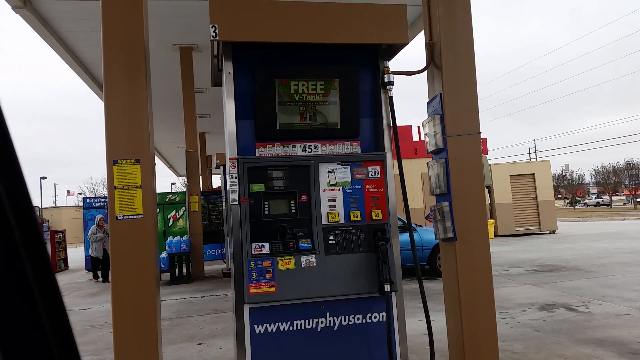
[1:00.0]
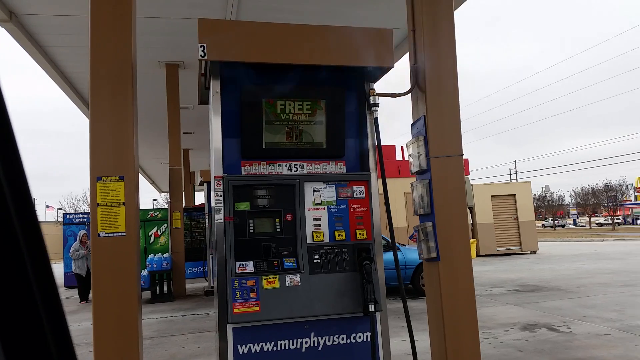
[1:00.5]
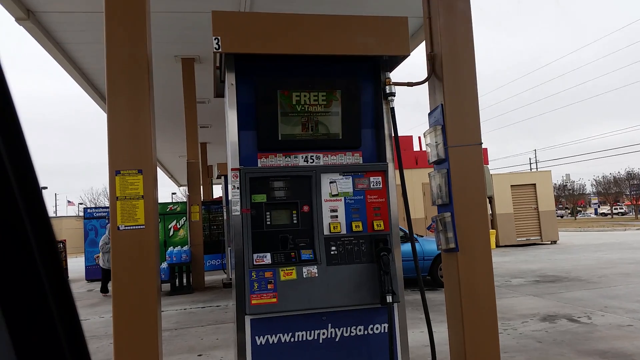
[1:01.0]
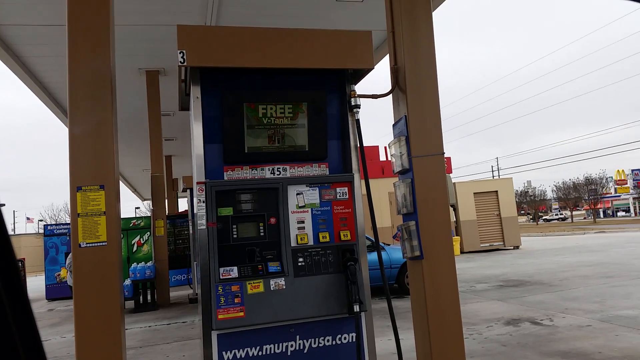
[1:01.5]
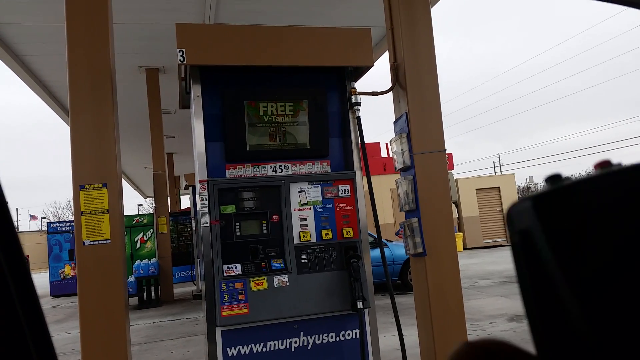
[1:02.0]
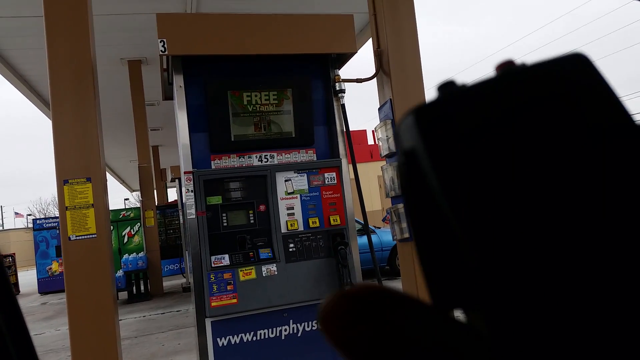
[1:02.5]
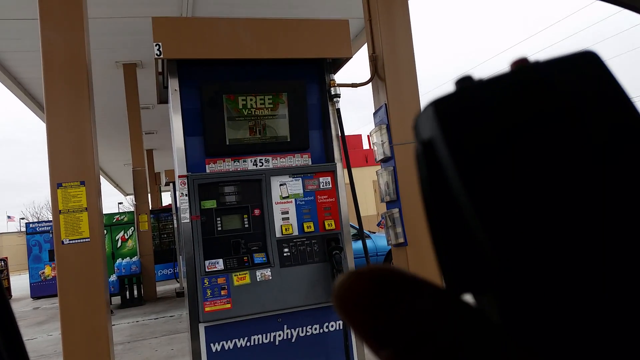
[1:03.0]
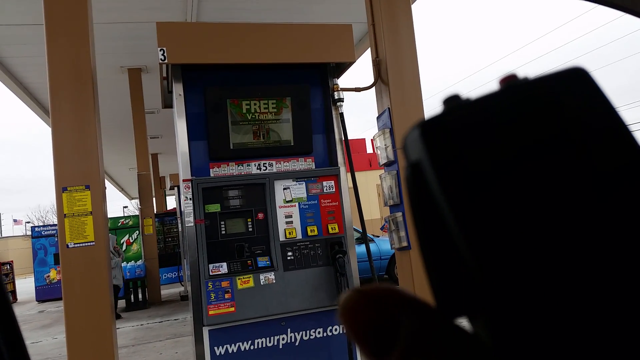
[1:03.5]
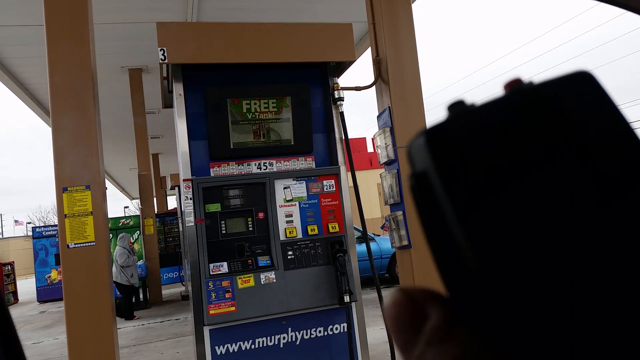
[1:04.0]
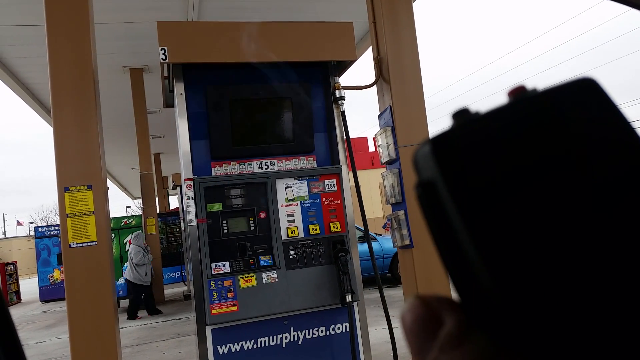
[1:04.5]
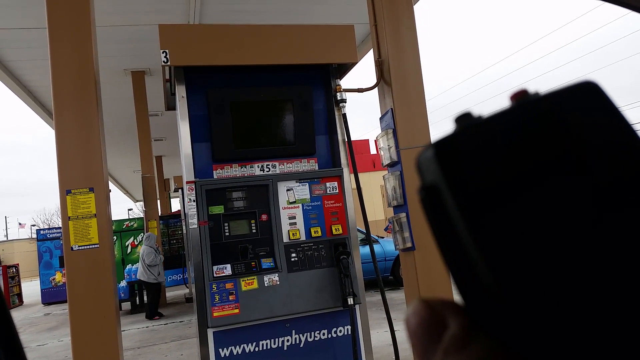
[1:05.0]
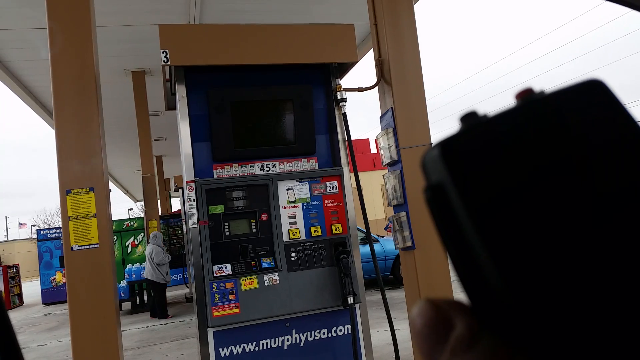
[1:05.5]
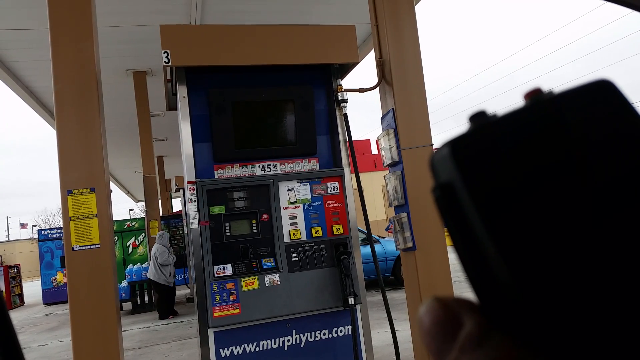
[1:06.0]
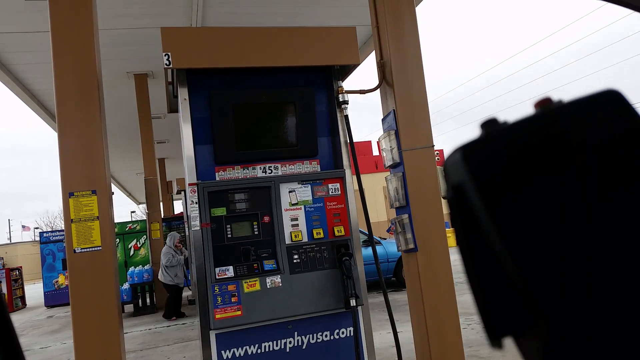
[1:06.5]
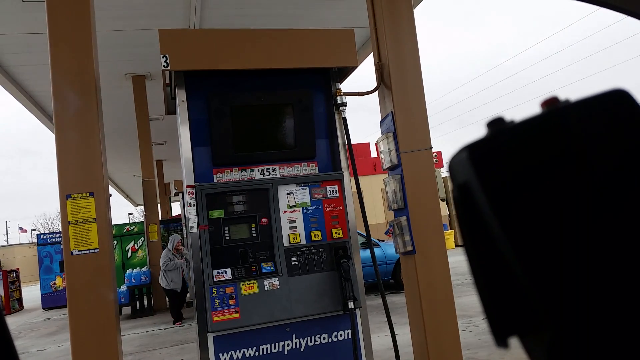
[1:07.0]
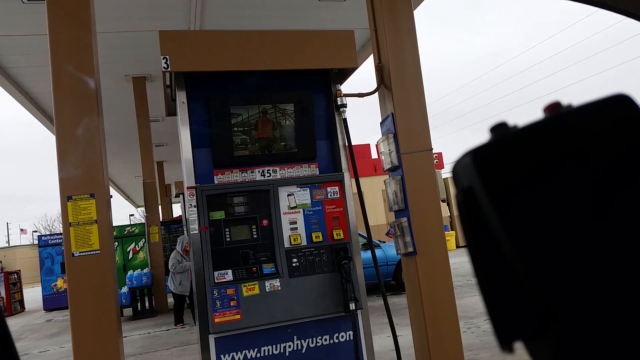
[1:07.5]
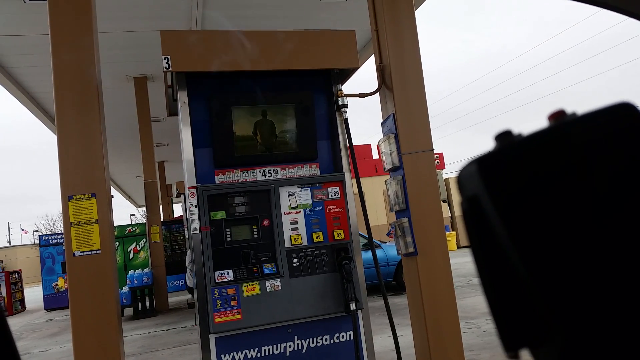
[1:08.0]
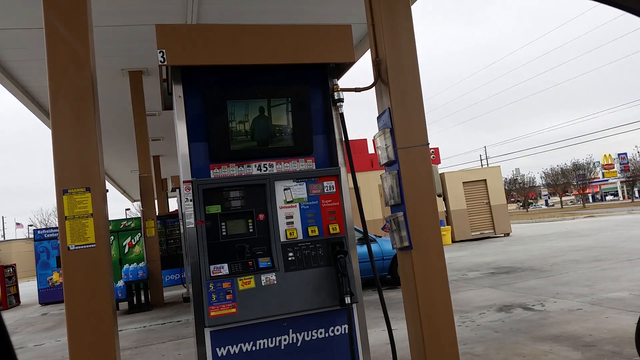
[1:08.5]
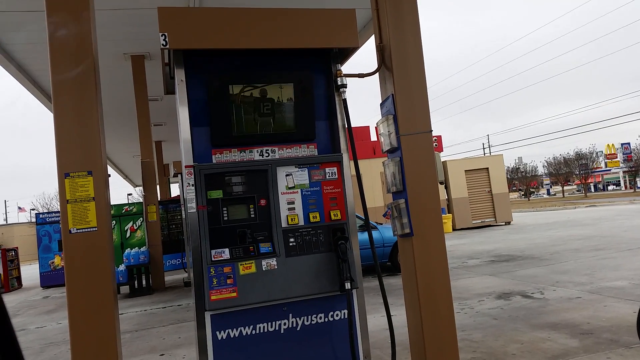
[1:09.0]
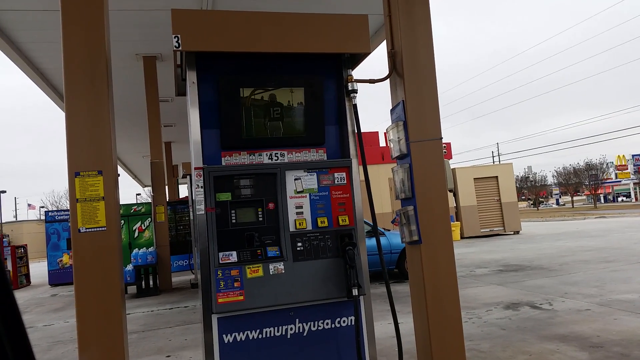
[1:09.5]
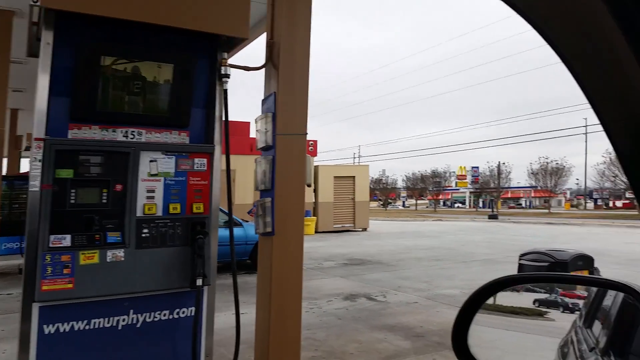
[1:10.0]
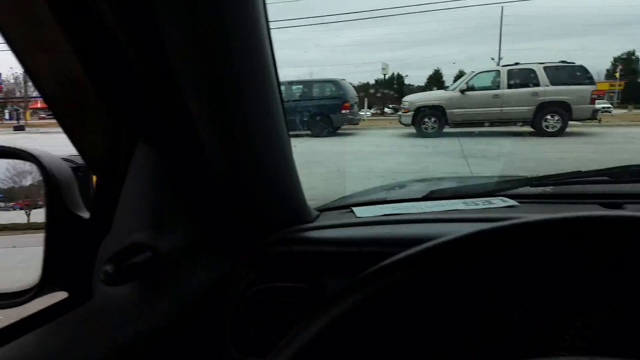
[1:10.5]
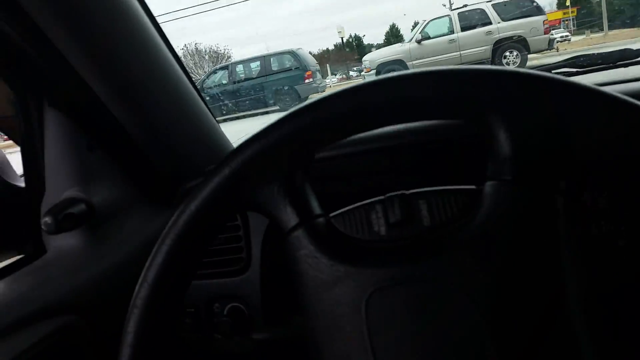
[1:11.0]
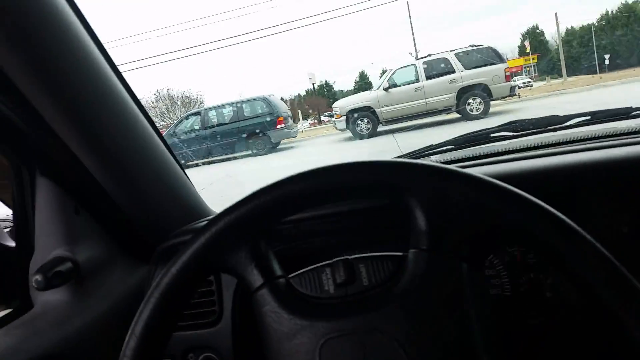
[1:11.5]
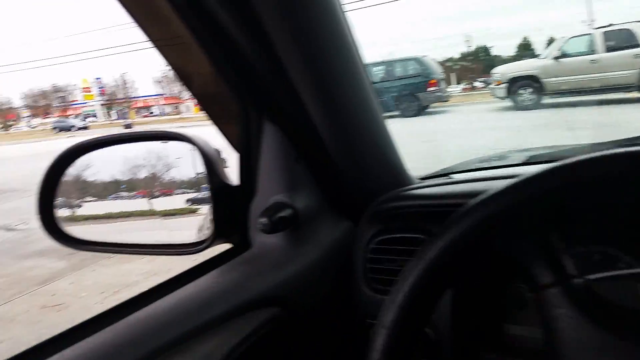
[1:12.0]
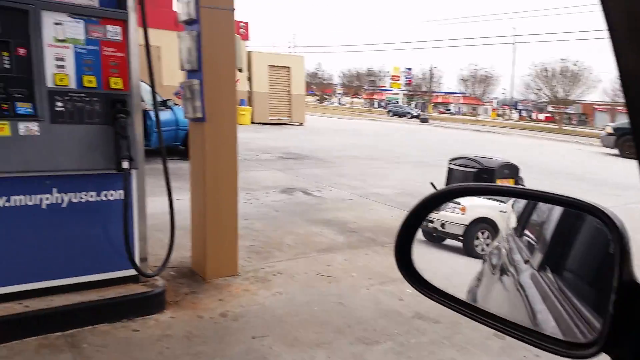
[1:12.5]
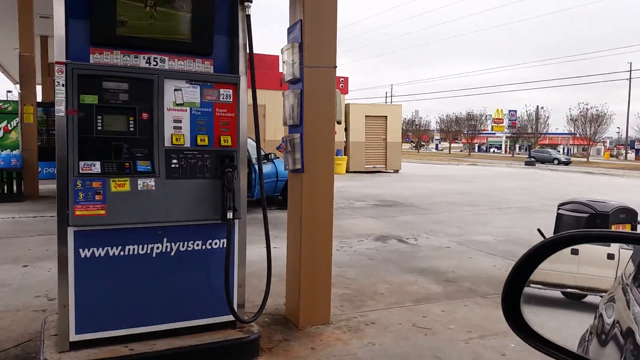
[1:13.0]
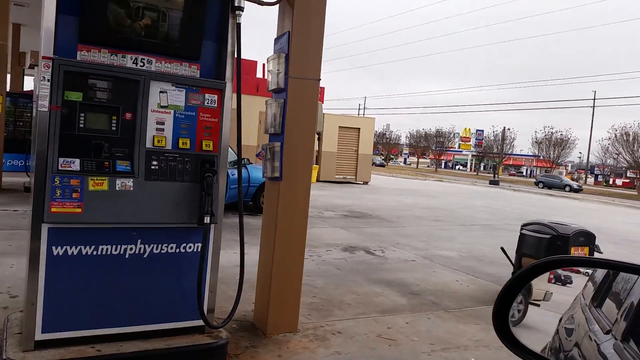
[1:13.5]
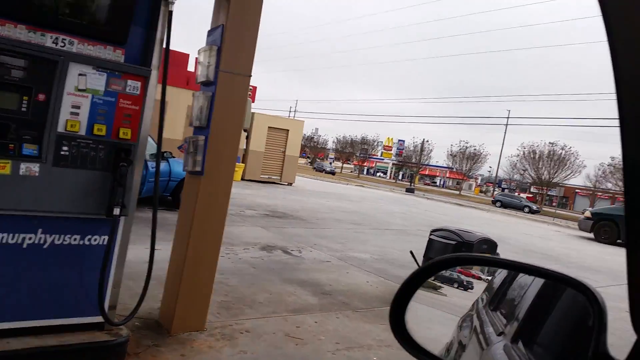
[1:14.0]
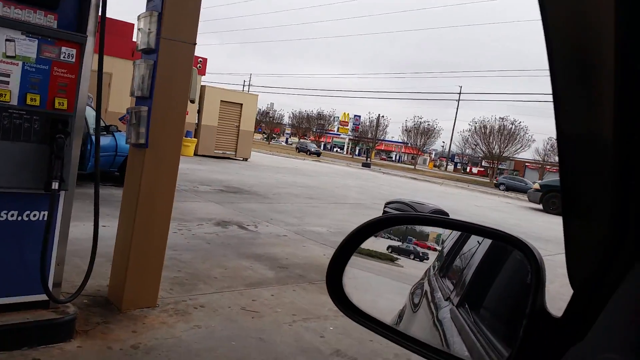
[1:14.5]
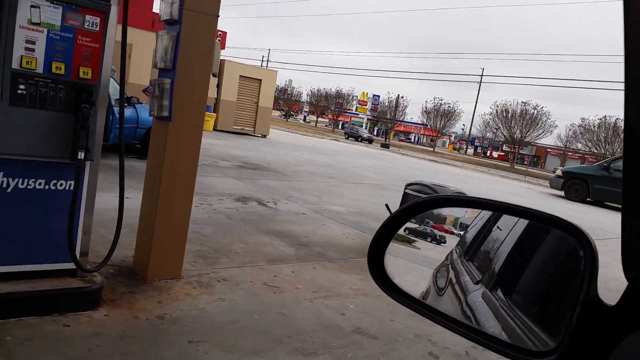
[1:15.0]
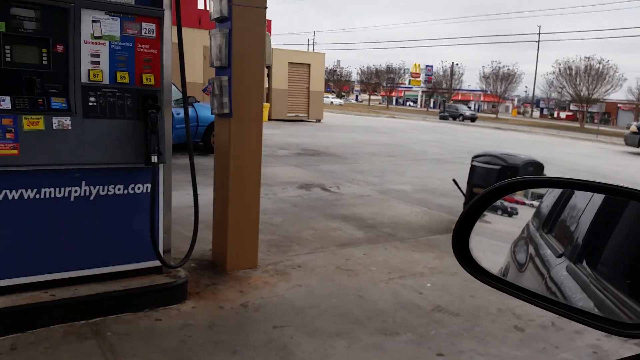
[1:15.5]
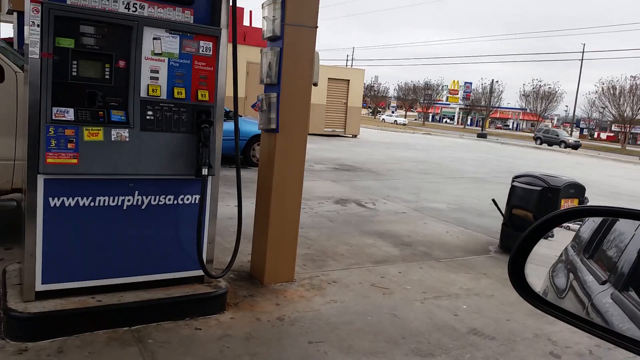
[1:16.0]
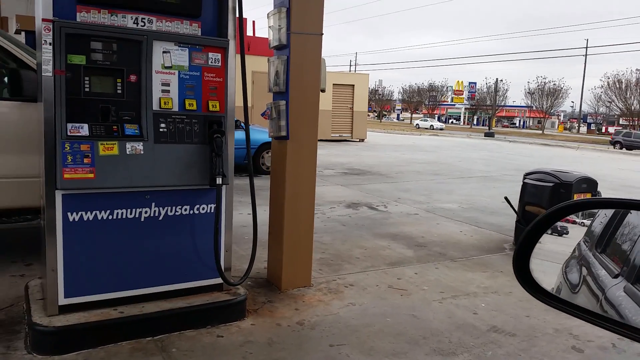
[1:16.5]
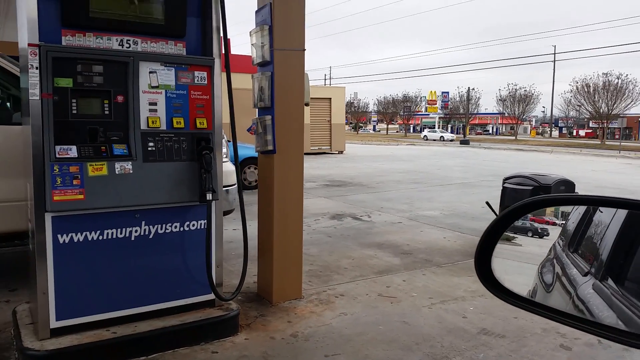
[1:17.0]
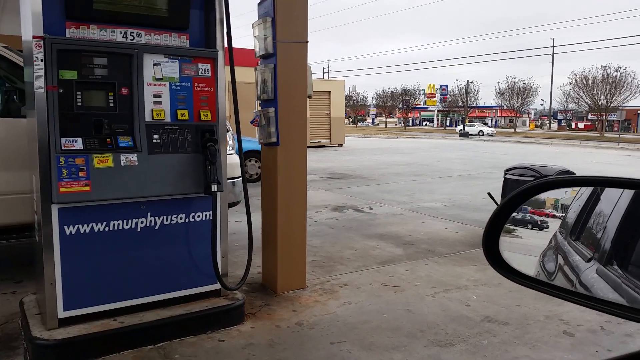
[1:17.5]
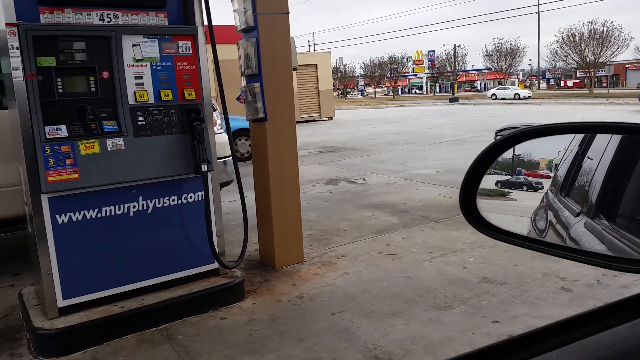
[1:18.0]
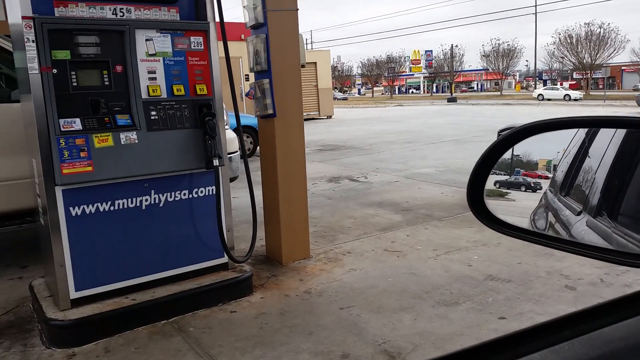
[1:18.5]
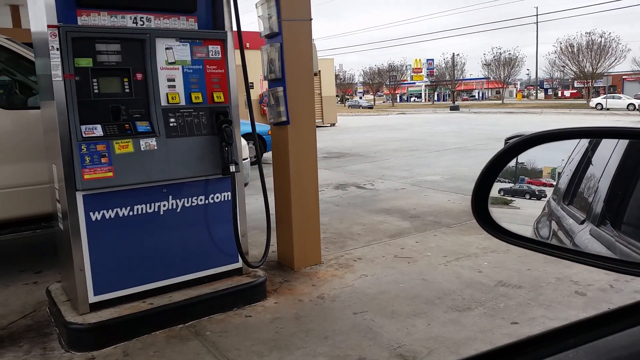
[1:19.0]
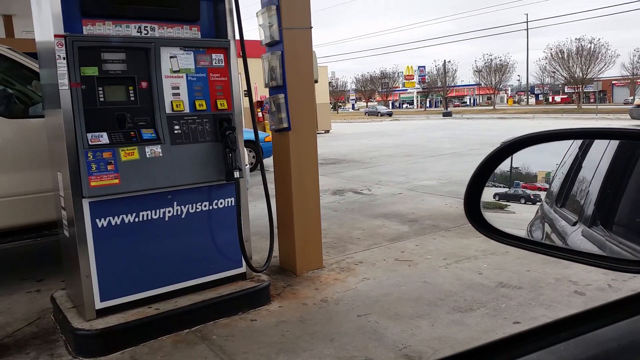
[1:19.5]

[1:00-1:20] The woman who got out of the blue vehicle, wearing a gray hoodie, appears to be returning to her vehicle. The person still inside their vehicle holds the device up one more time and presses the button on its left-hand side, and another image comes on the pump's screen; the device seems to be some sort of remote, since the image changes each time that button is pressed. They then film their side mirror, in which a white vehicle drives behind them and pulls up to the pump right next to them. The gas station is just off what looks like a fairly busy street, with cars traveling back and forth along the roadway in front of them.